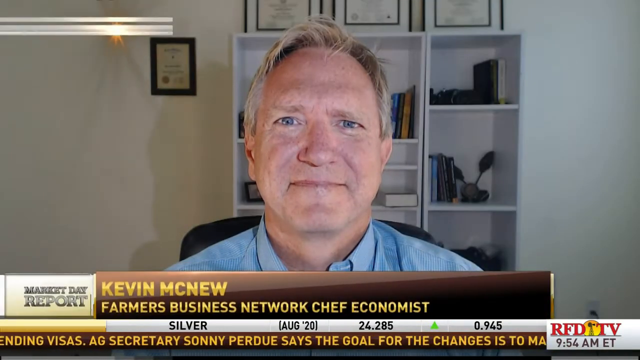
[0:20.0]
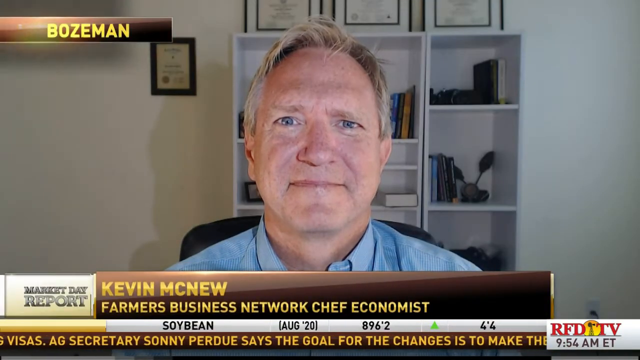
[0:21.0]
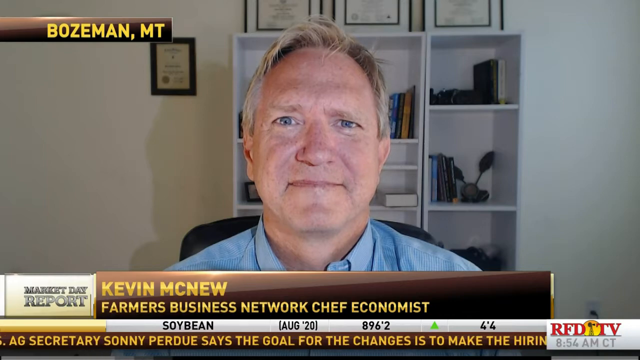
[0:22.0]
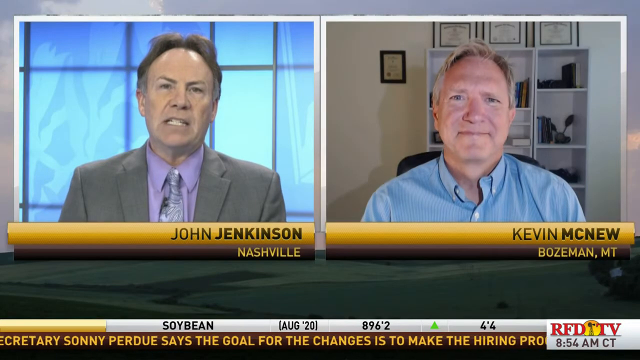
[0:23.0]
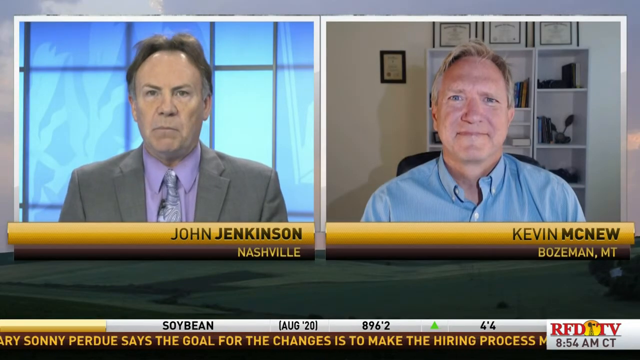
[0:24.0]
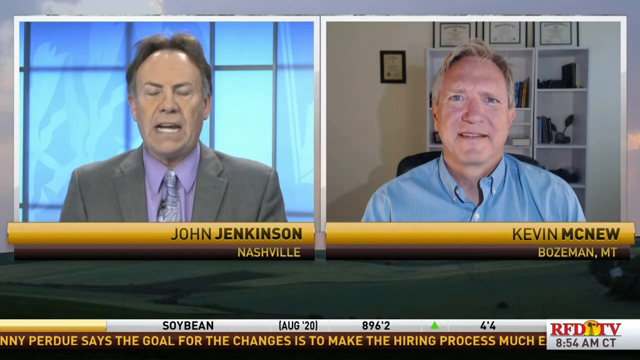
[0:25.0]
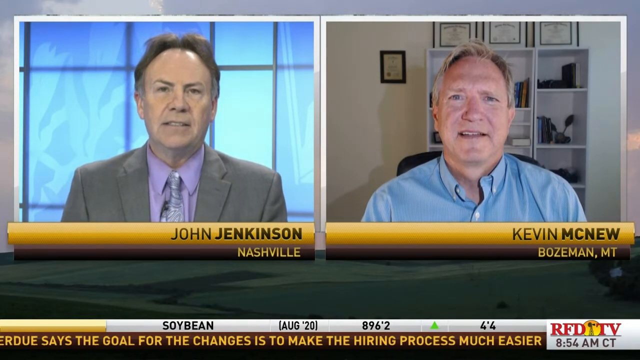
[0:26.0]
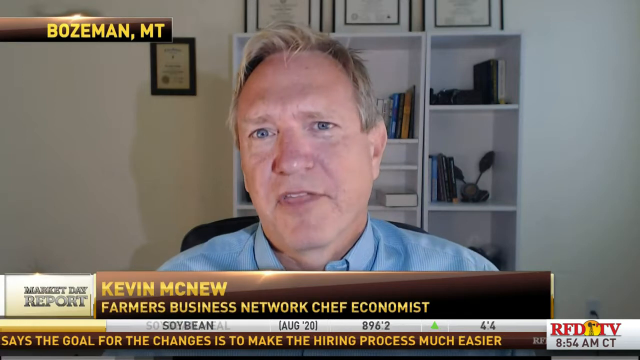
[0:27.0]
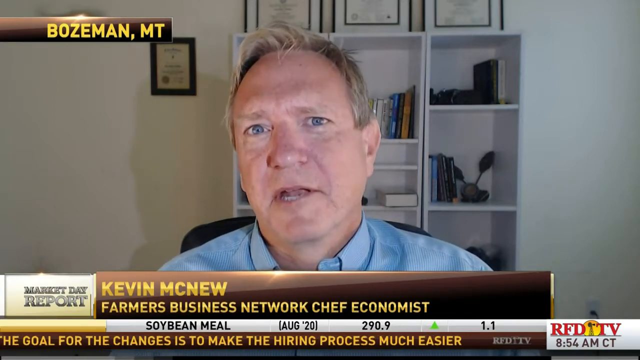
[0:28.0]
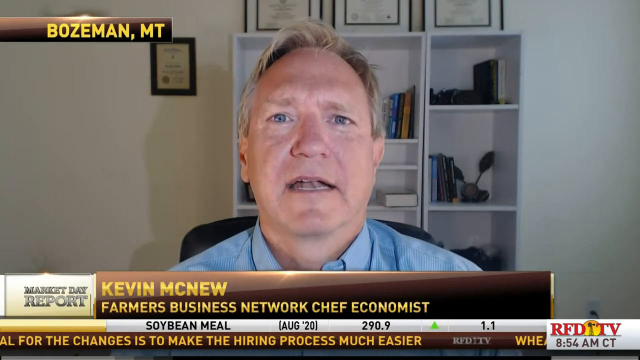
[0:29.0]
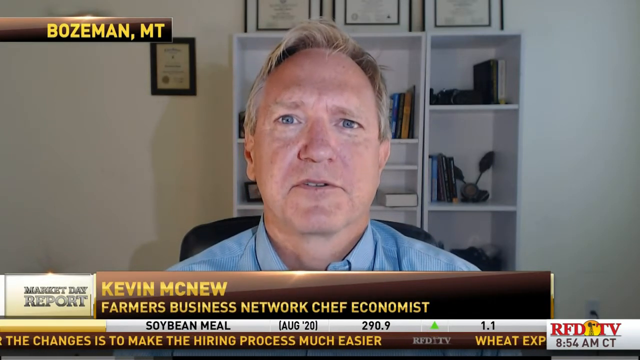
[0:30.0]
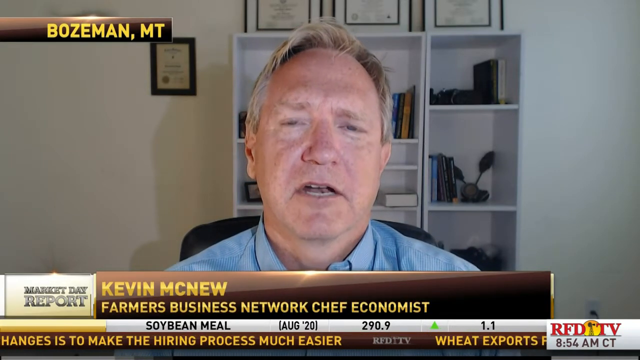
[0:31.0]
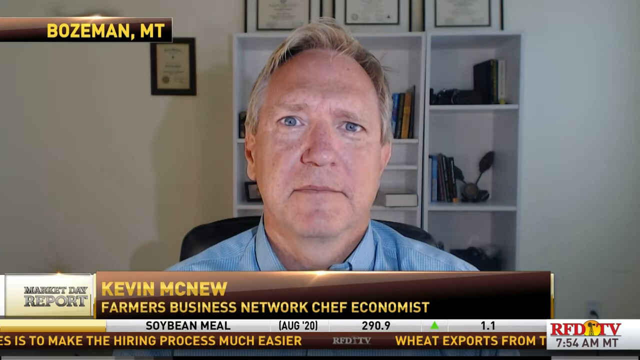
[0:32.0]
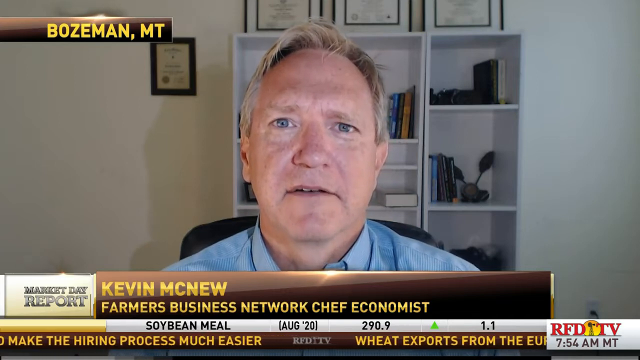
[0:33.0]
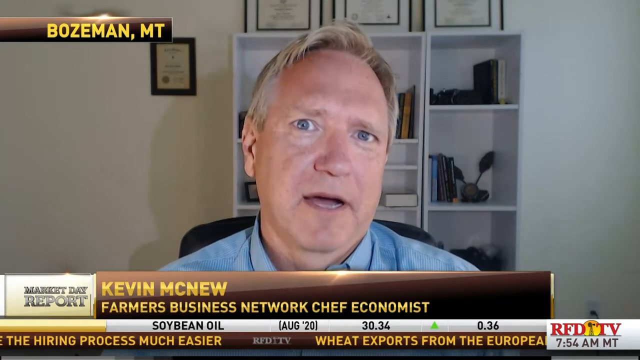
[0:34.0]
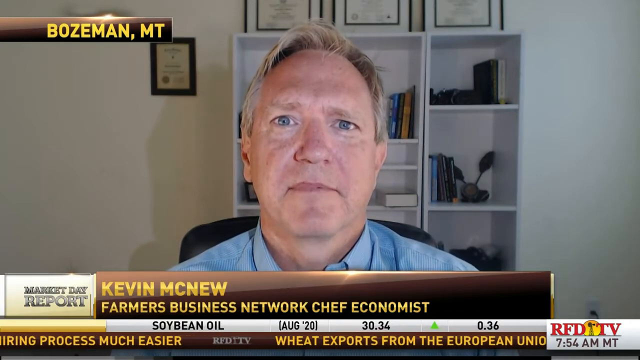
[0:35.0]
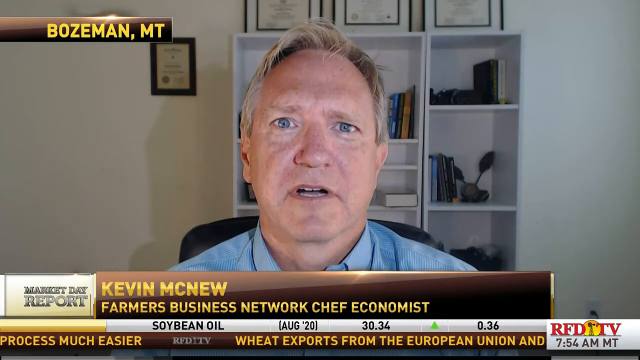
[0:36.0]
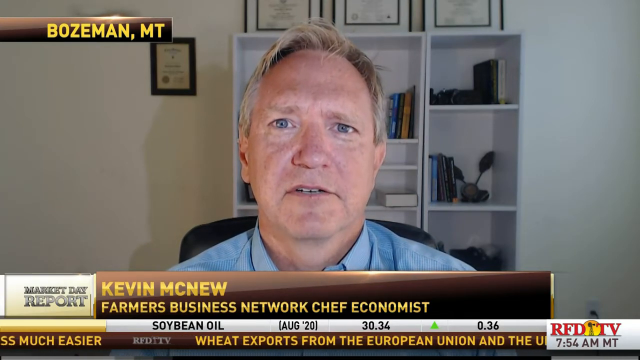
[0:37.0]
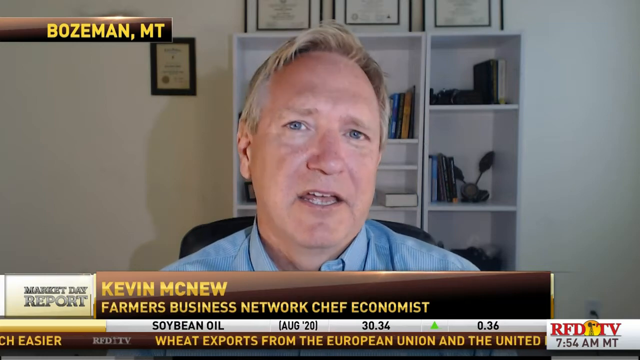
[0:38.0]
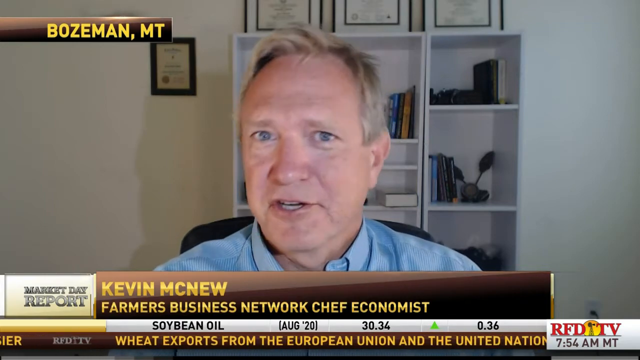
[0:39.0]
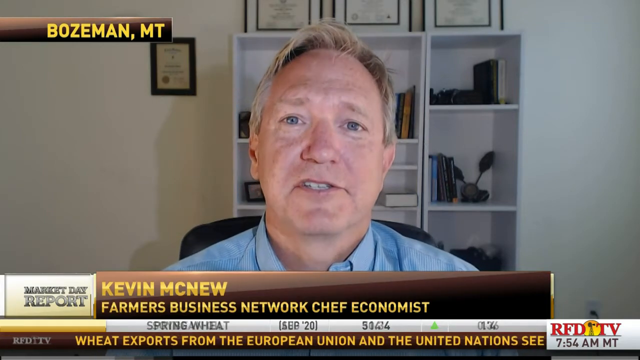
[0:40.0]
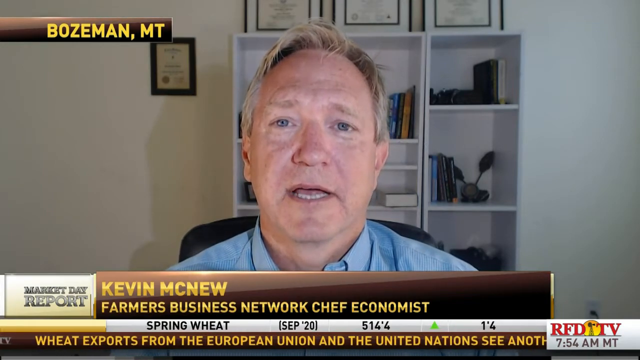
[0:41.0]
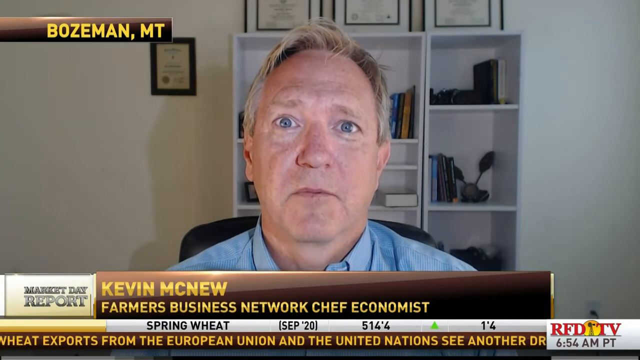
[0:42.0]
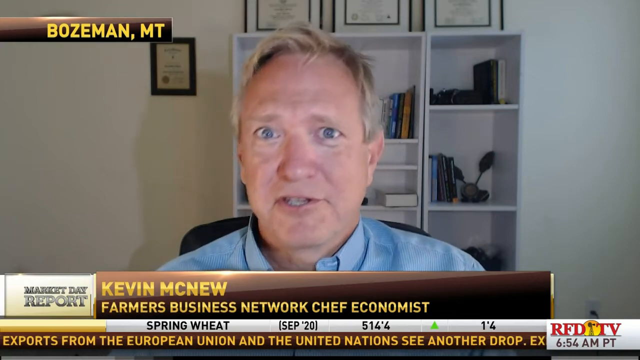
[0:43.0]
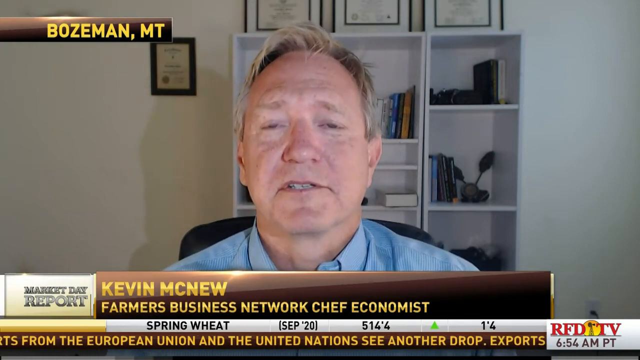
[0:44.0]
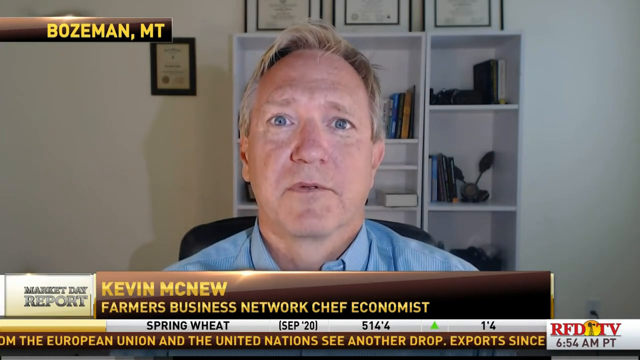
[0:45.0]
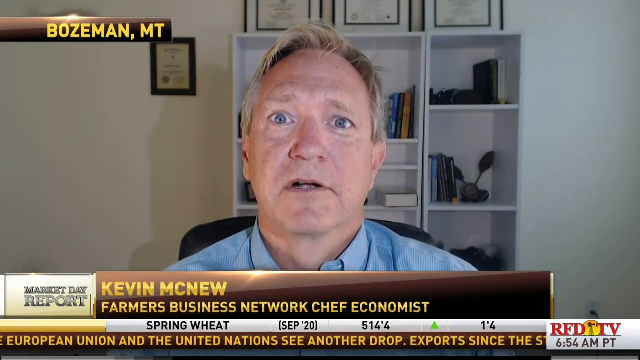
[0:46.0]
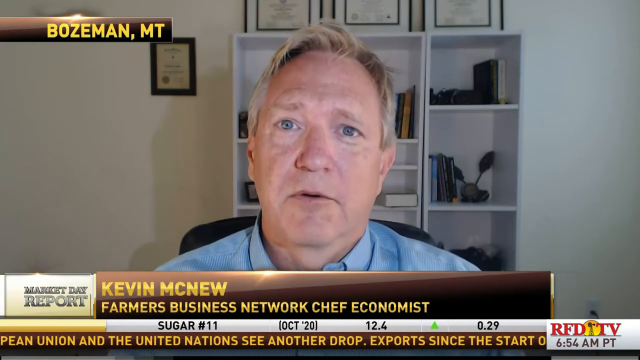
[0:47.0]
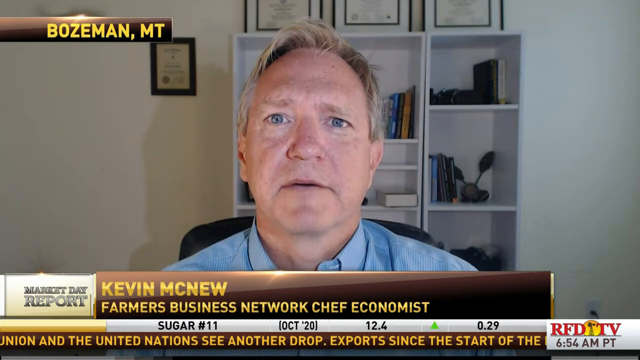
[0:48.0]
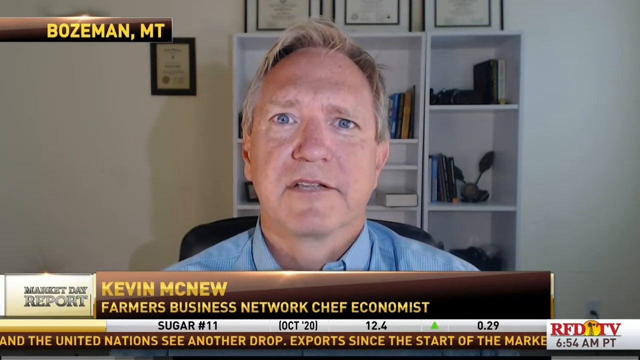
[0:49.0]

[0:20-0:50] The invited analyst, Kevin McNeil of Farmers Business Network, is a white man with grey hair in a blue top, sitting on a chair and reporting from Bozeman MT. Behind him is a shelf with some books. The screen splits in two, showing John Jenkinson from Nashville and Kevin McNeil from Bozeman MT. As McNeil talks, an award is on the wall by him and three other awards are on top of the shelf behind him, with a white background.